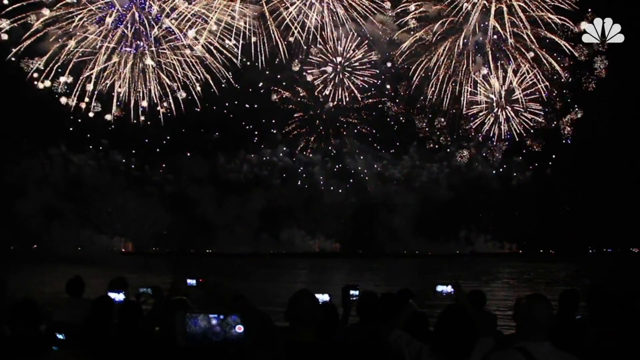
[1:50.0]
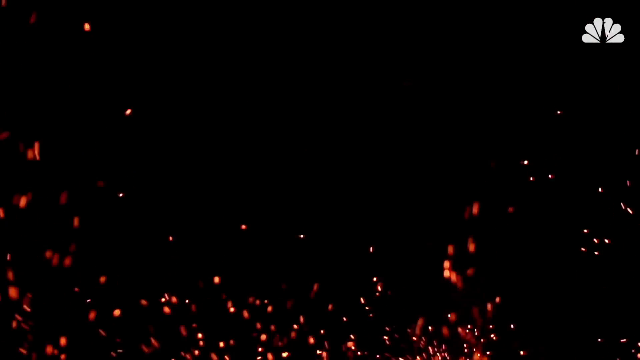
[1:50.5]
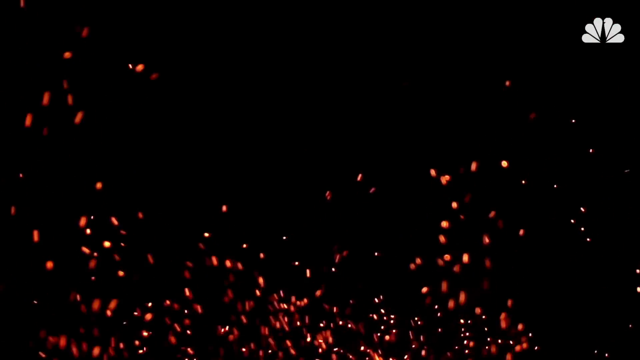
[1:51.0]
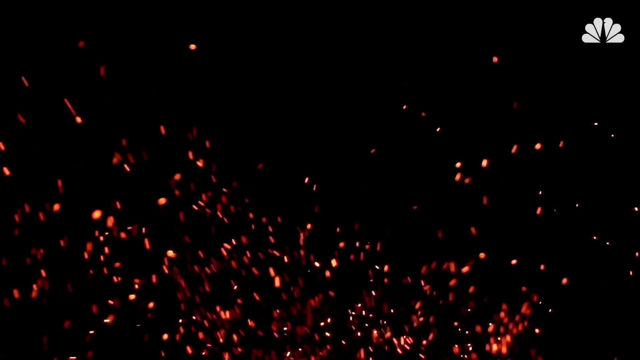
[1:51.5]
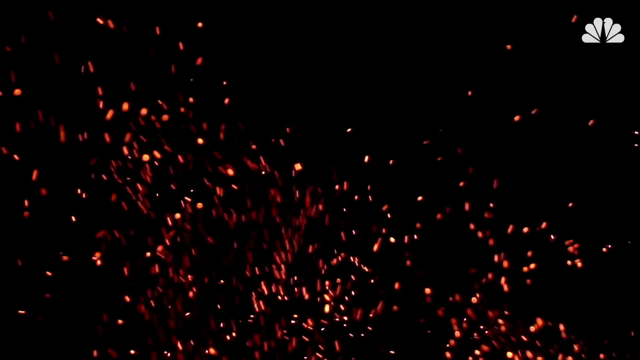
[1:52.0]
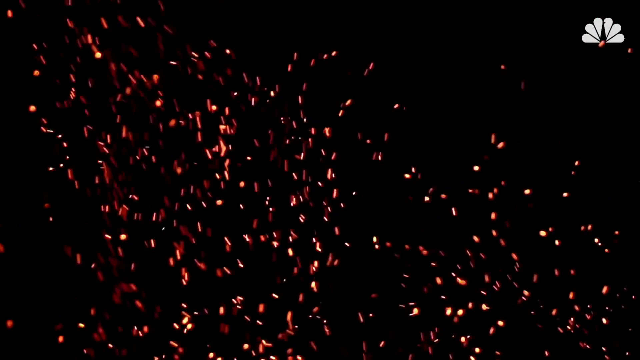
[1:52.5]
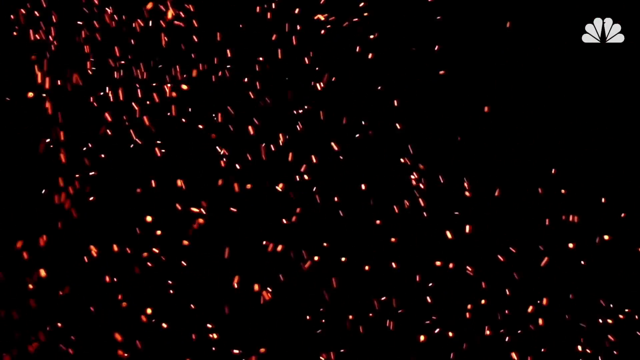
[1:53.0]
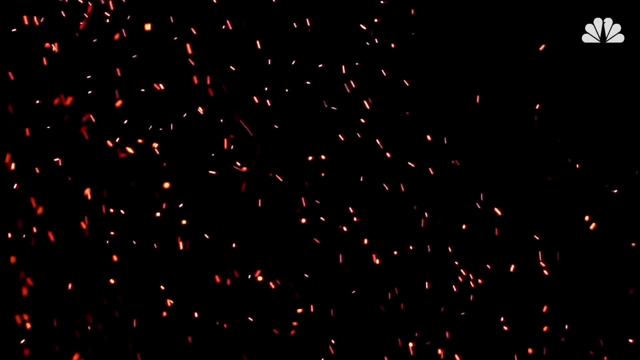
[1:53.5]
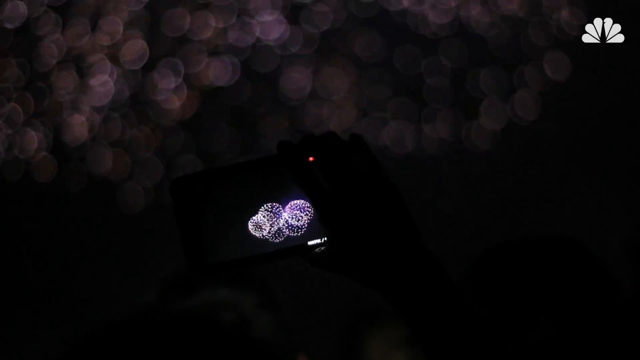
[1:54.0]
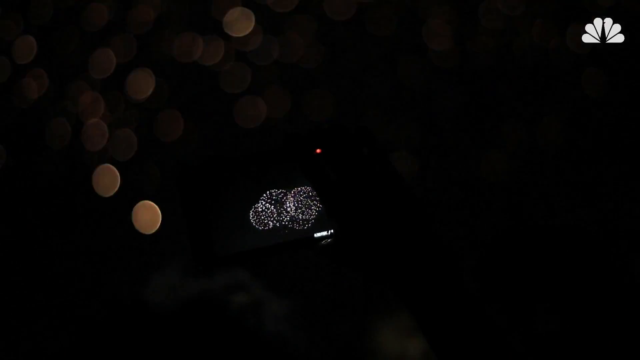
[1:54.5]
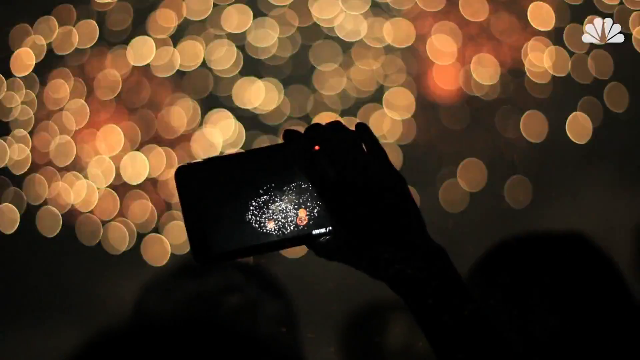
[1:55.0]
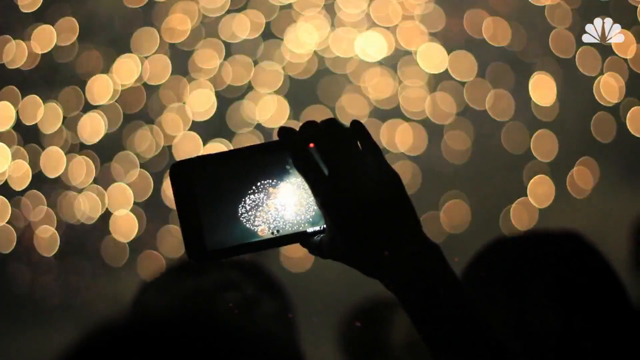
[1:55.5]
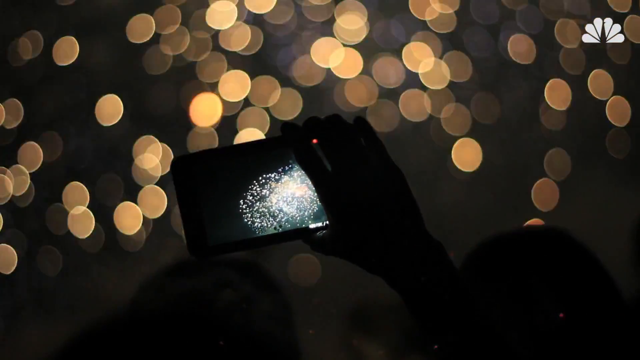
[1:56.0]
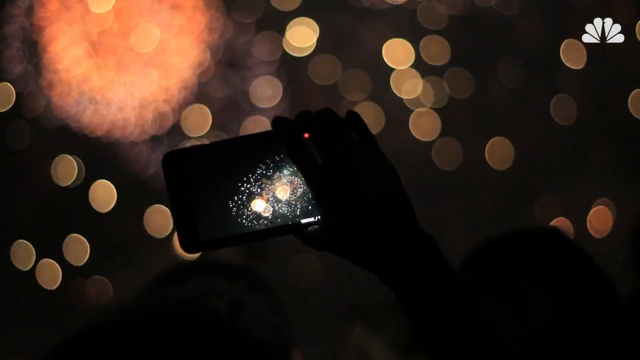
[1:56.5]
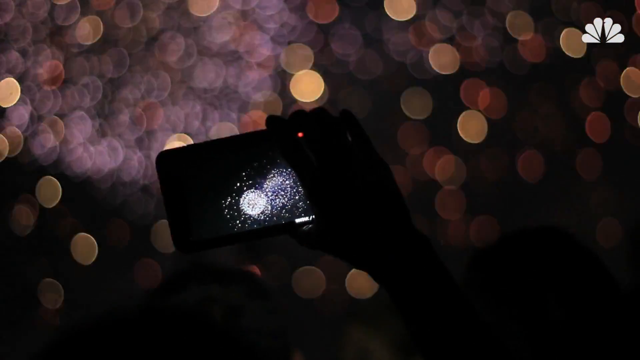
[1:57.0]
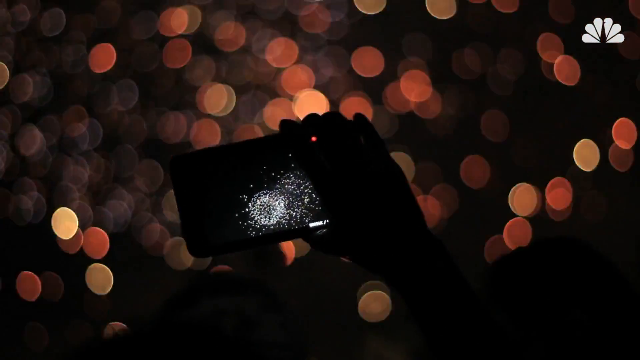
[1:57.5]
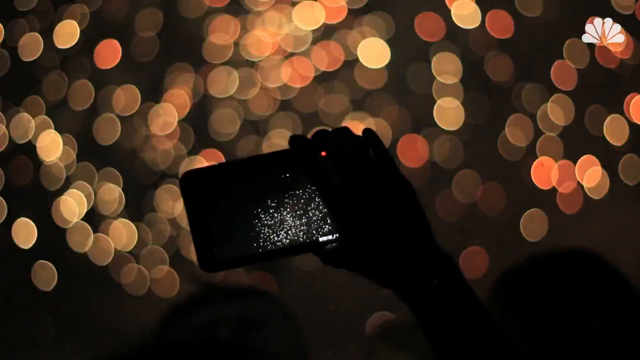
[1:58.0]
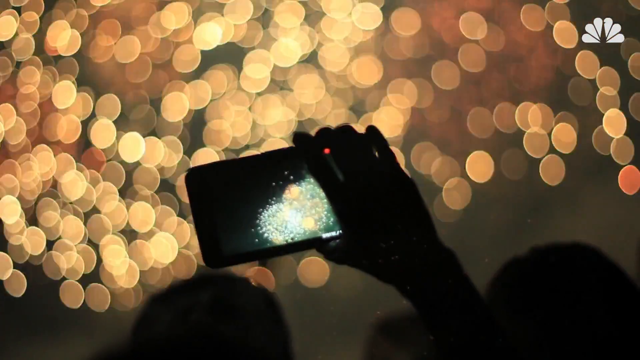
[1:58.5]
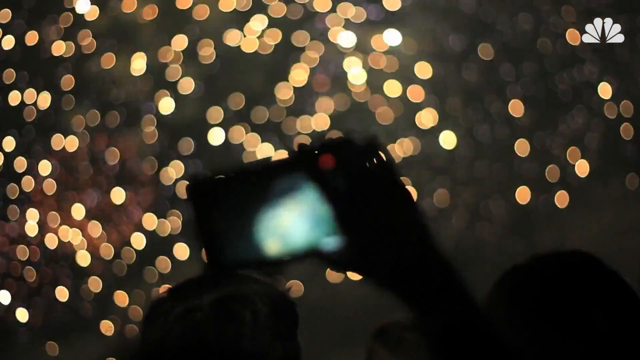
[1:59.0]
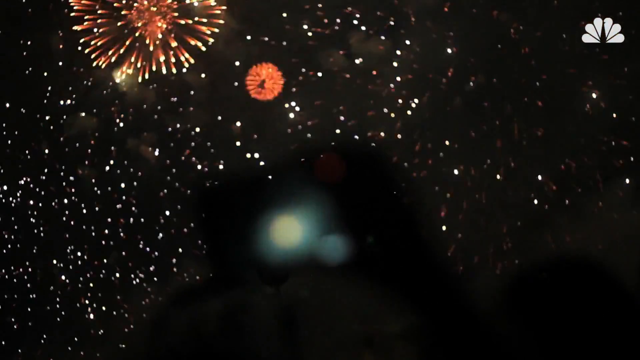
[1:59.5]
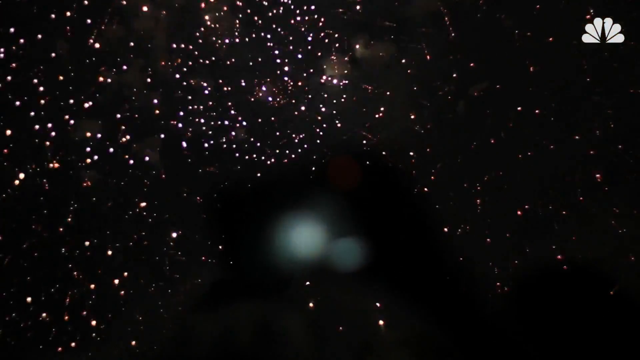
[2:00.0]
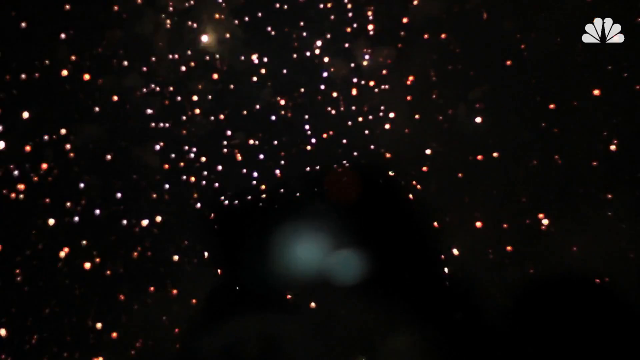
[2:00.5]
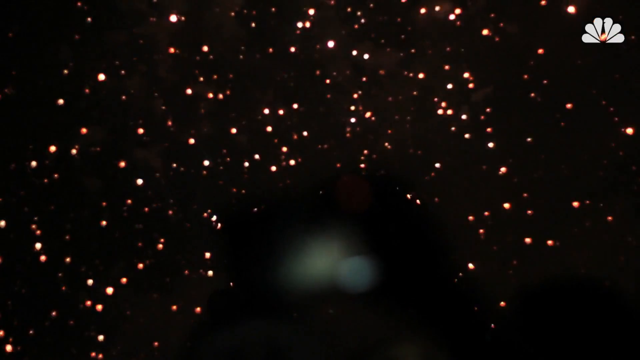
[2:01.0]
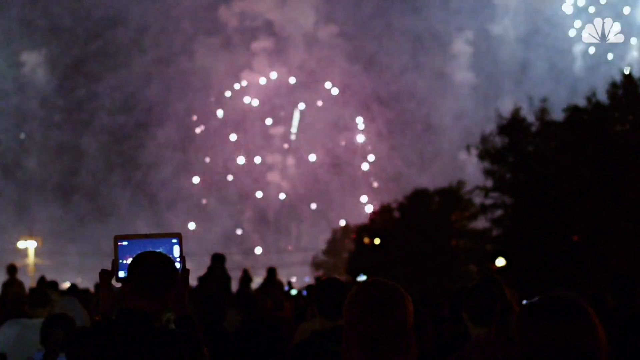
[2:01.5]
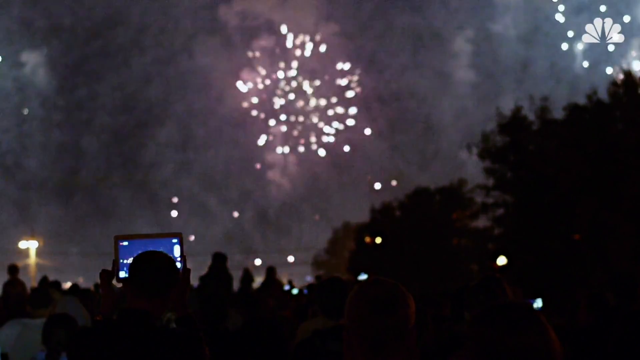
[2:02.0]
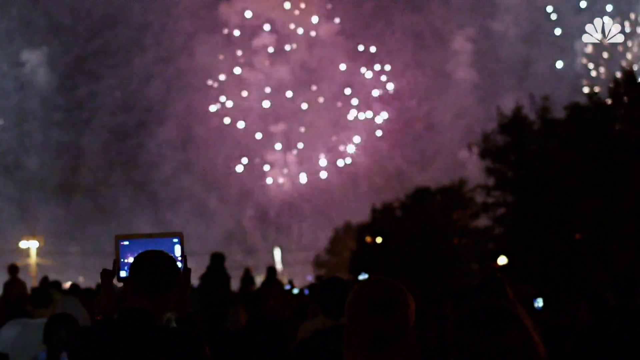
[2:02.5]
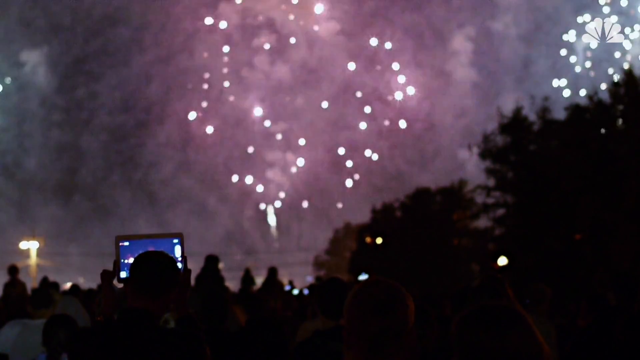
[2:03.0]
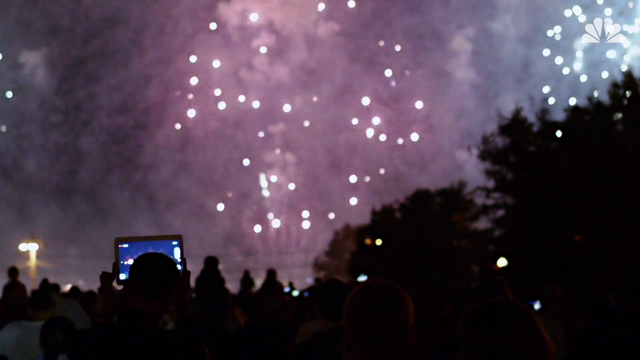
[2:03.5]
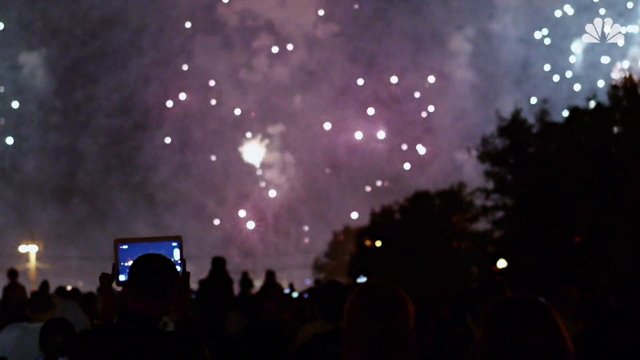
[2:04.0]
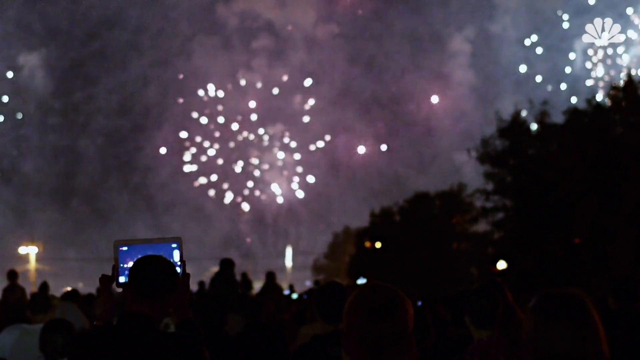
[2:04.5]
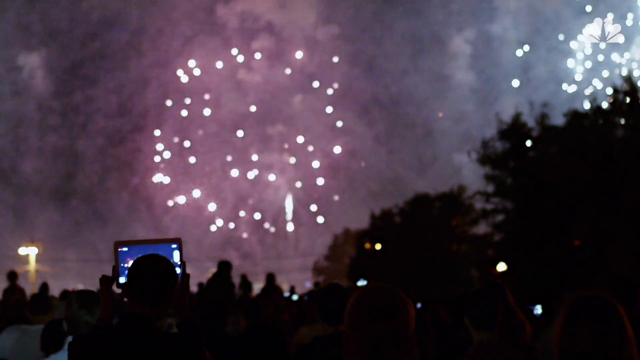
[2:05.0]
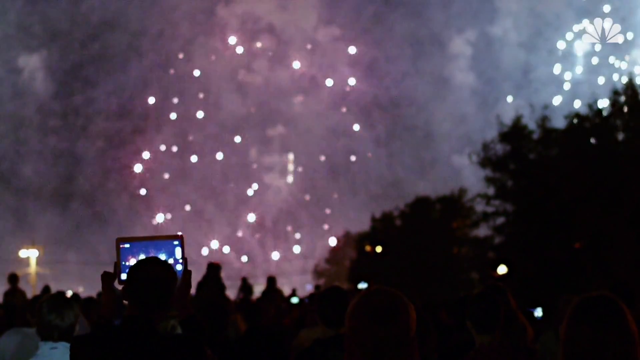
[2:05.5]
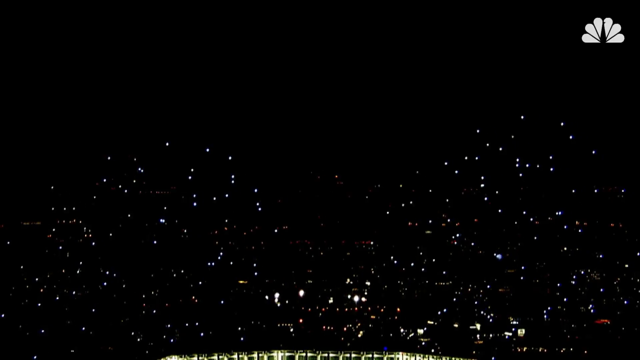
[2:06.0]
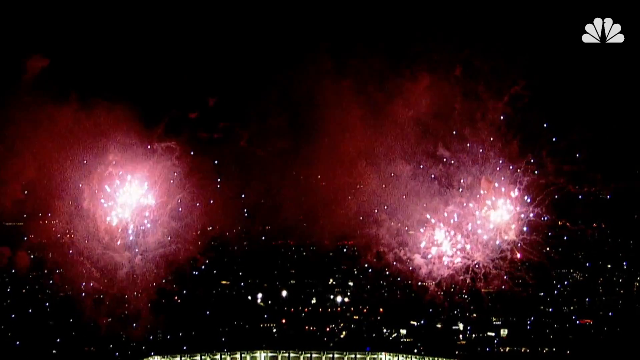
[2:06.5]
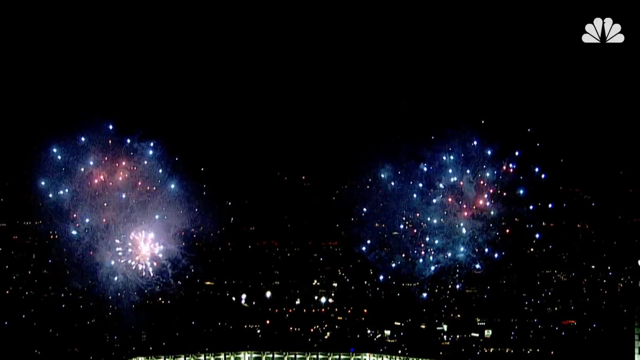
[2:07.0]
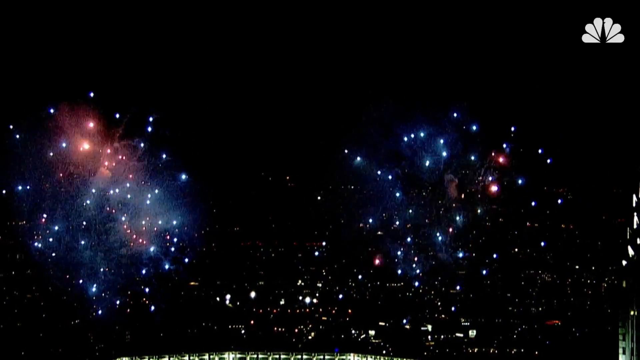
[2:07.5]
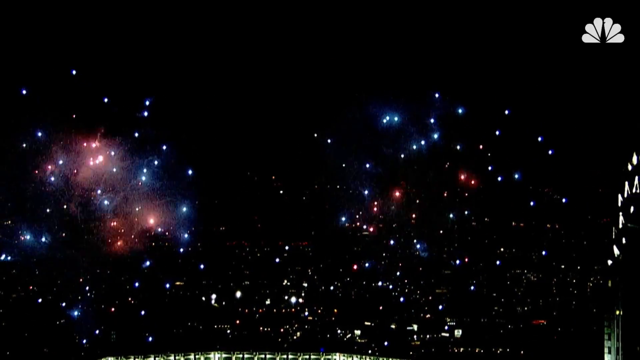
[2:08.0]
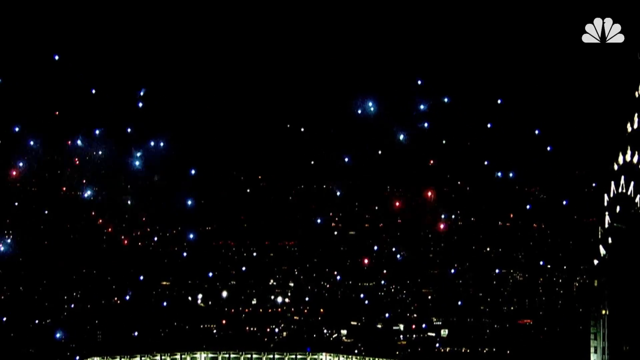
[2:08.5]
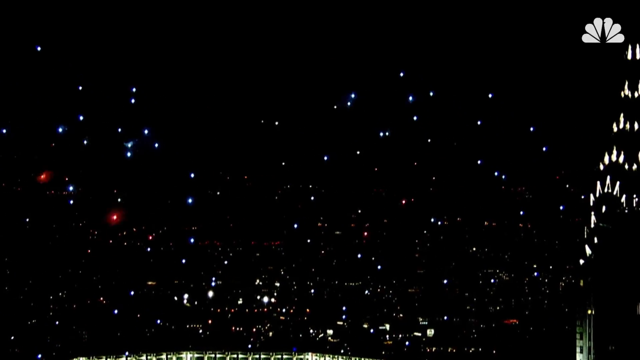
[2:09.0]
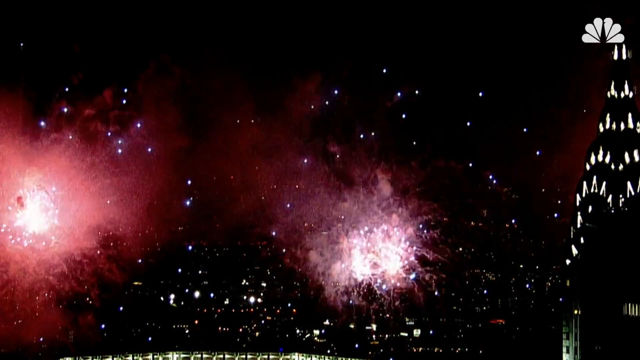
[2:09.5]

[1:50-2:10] Fireworks are detonated in three distinct areas; these fireworks are white and yellow. Next, red embers of a fire light up the sky as the wind pushes them upward. More fireworks follow, this time further away. A man holds a phone, recording the fire. Bright white flashes appear in the sky as more fireworks explode. People are gathered on what appears to be a field, watching the fireworks, with trees and bushes on the right. A person on their phone is also recording the fireworks. Red, blue and white fireworks illuminate the sky.